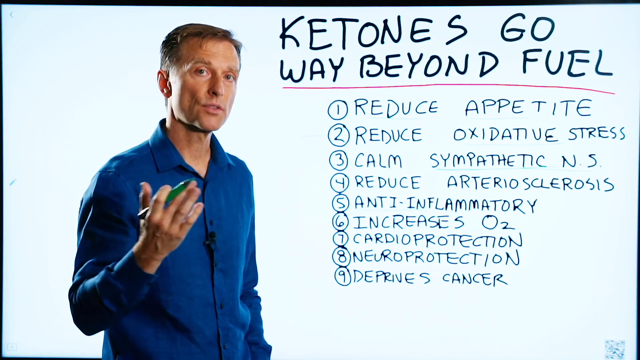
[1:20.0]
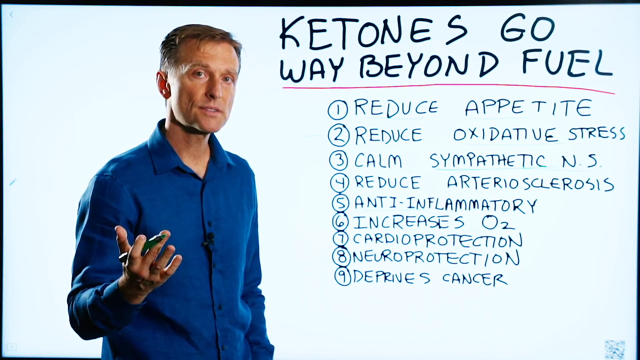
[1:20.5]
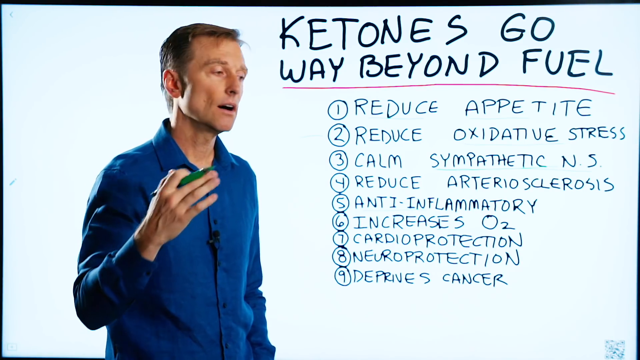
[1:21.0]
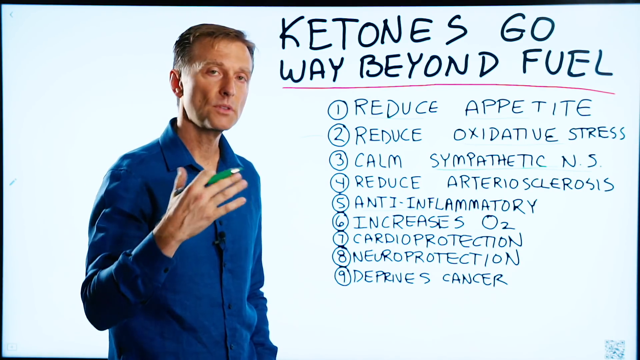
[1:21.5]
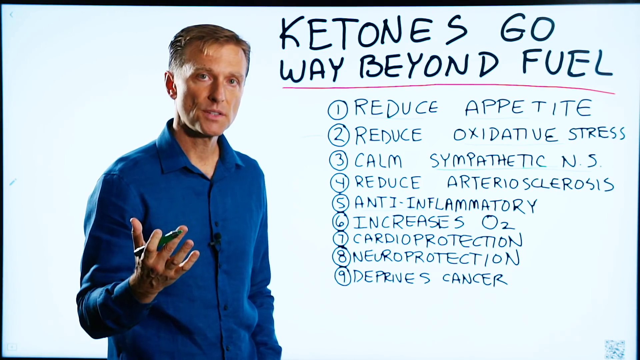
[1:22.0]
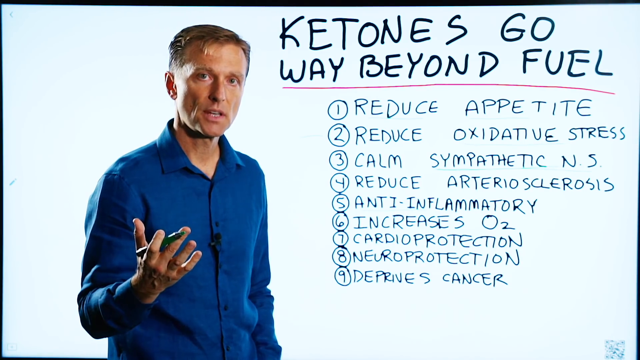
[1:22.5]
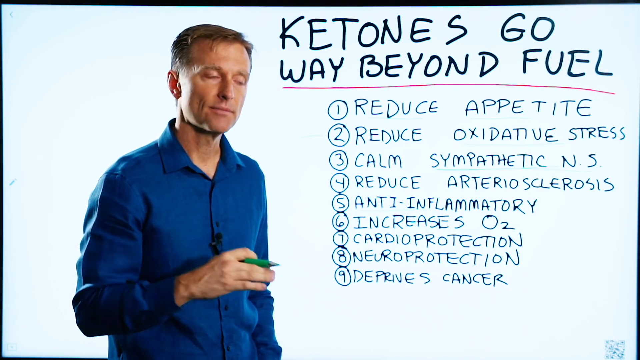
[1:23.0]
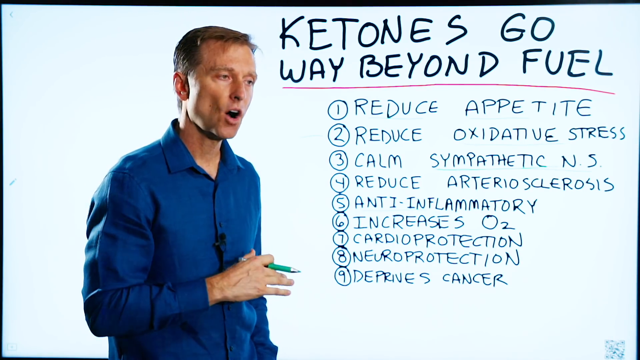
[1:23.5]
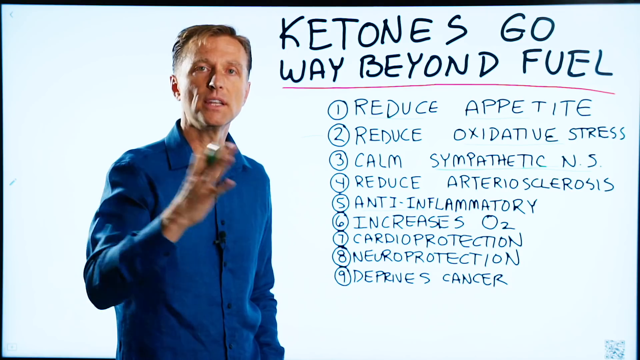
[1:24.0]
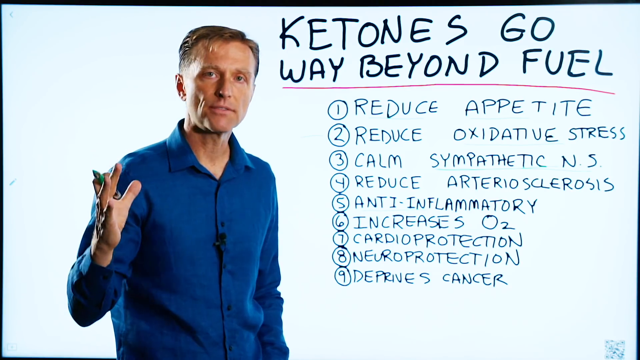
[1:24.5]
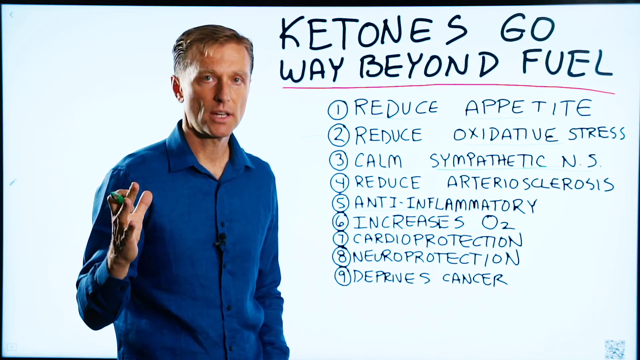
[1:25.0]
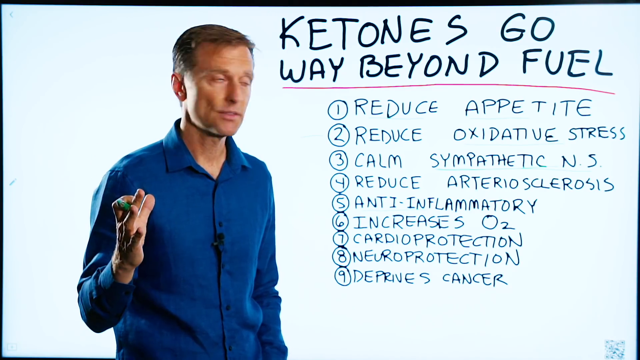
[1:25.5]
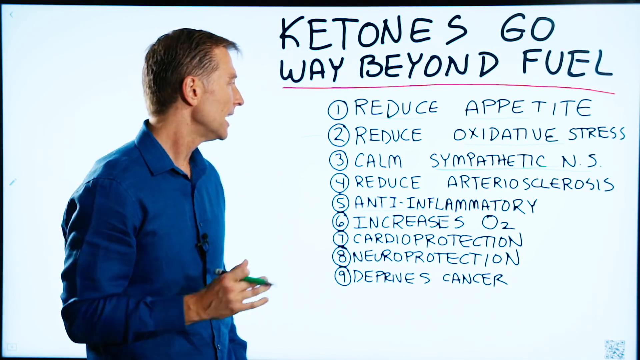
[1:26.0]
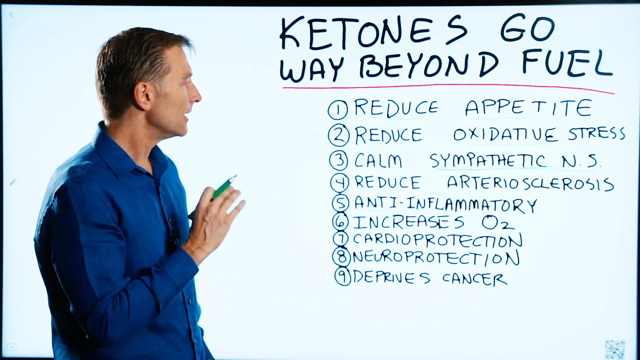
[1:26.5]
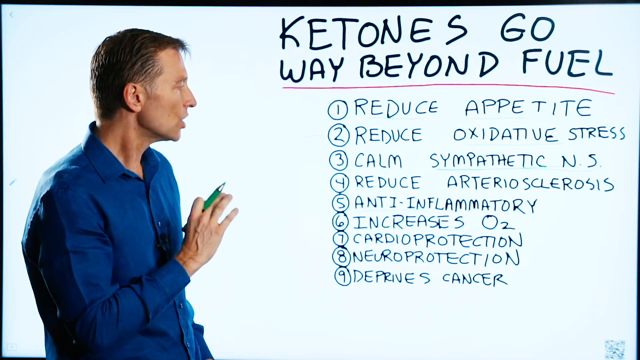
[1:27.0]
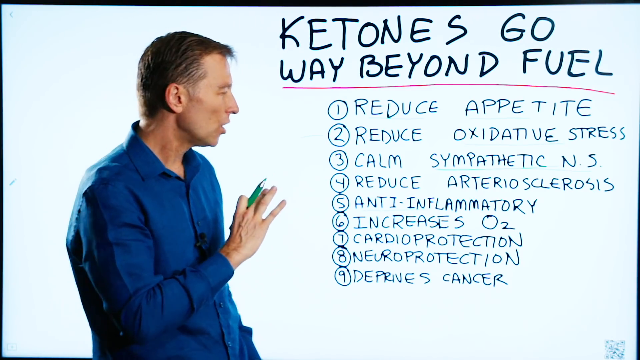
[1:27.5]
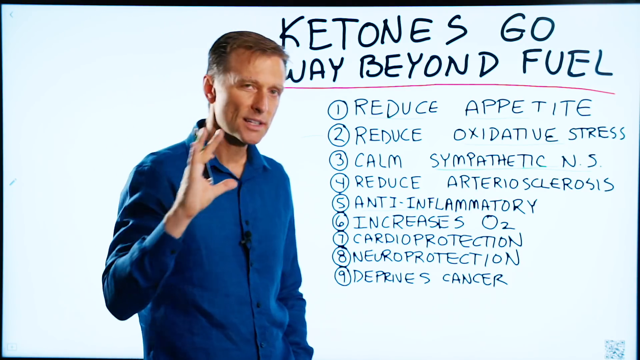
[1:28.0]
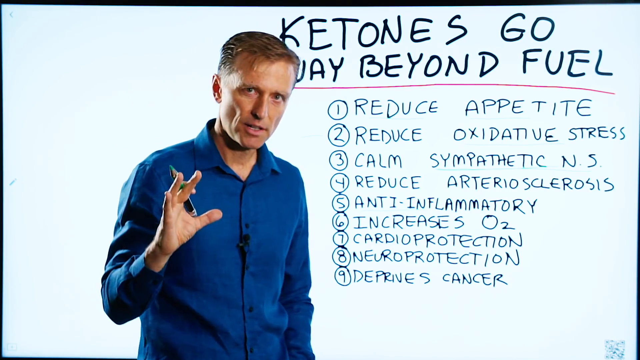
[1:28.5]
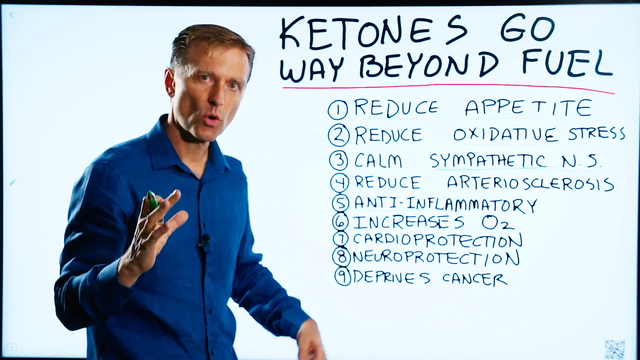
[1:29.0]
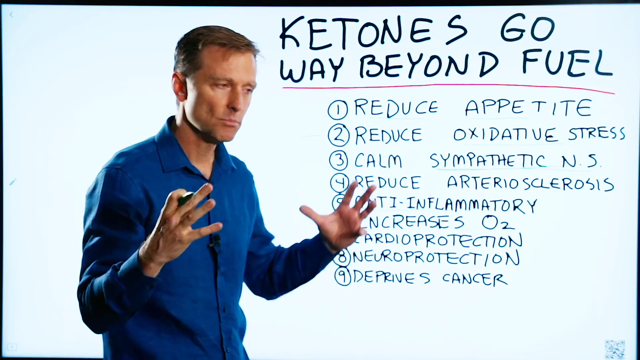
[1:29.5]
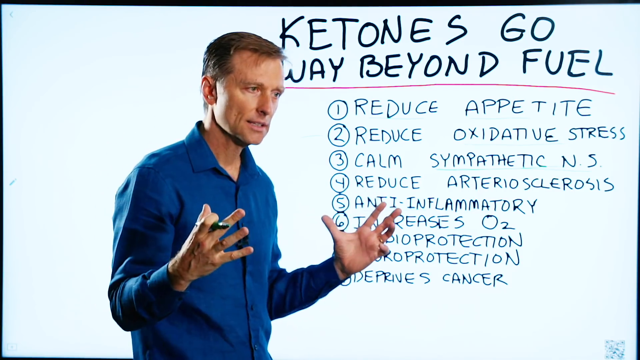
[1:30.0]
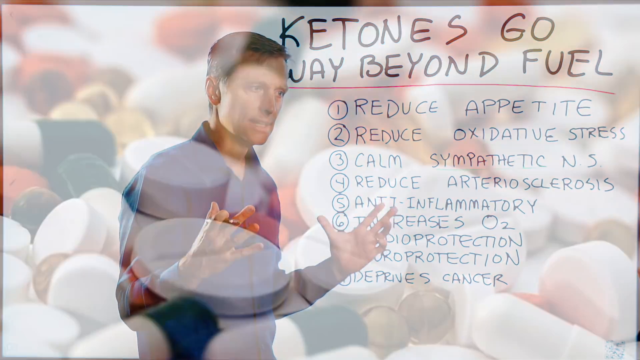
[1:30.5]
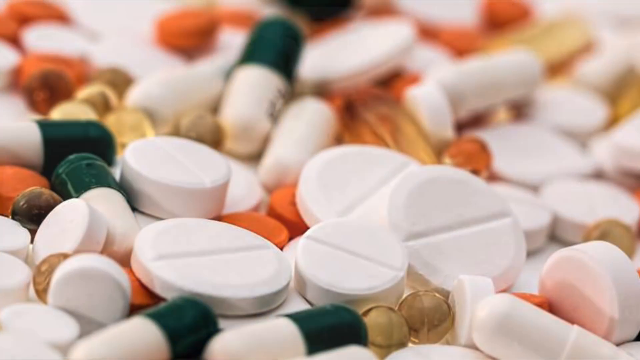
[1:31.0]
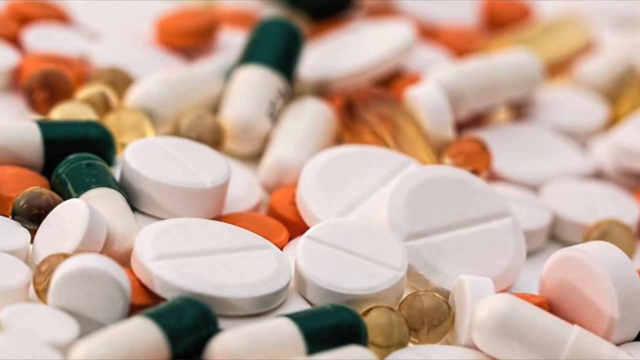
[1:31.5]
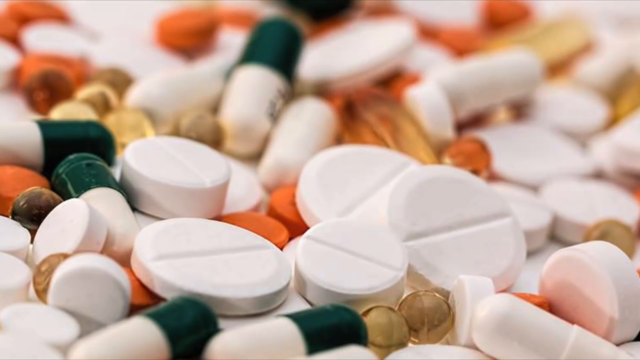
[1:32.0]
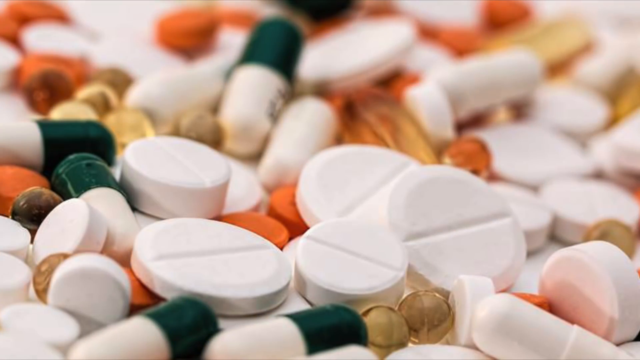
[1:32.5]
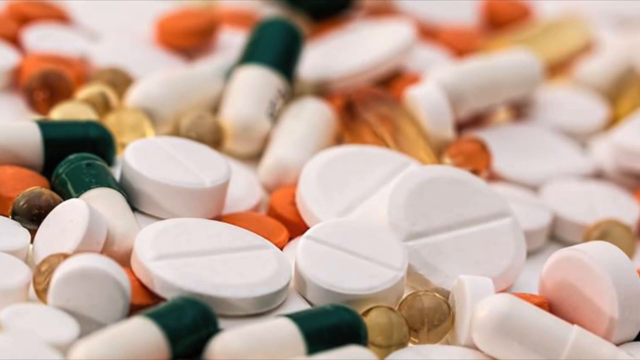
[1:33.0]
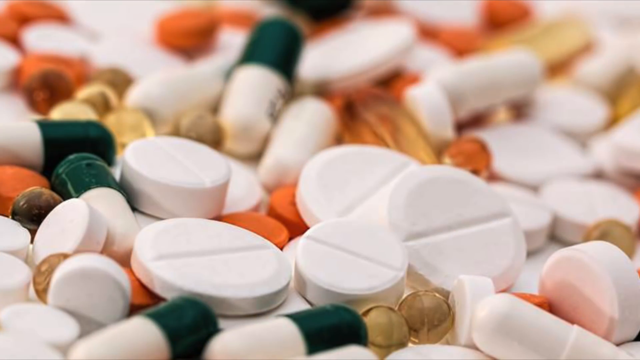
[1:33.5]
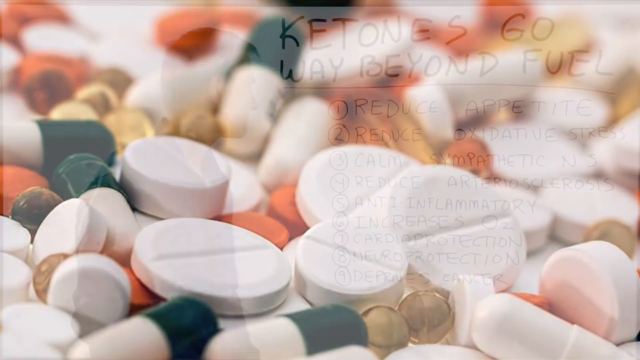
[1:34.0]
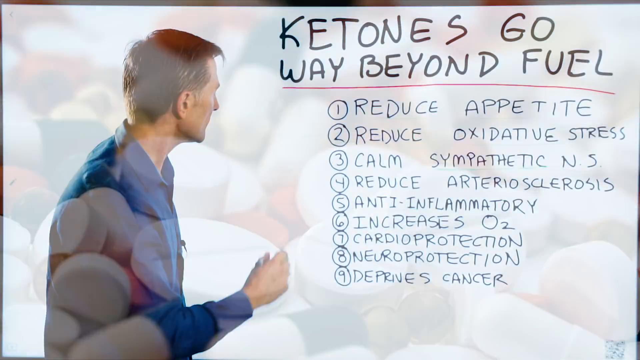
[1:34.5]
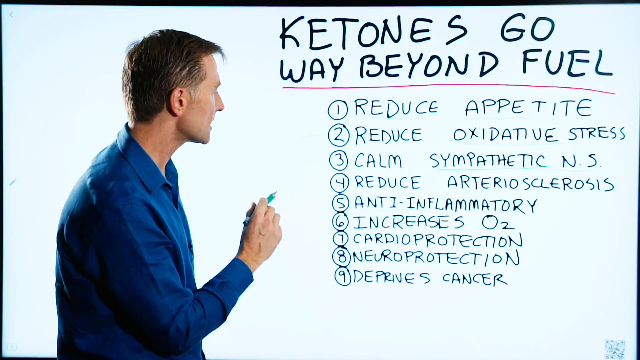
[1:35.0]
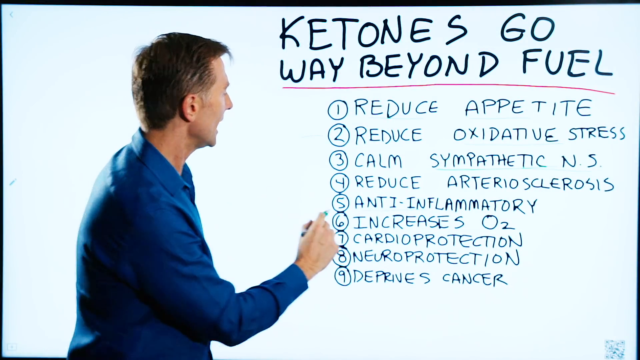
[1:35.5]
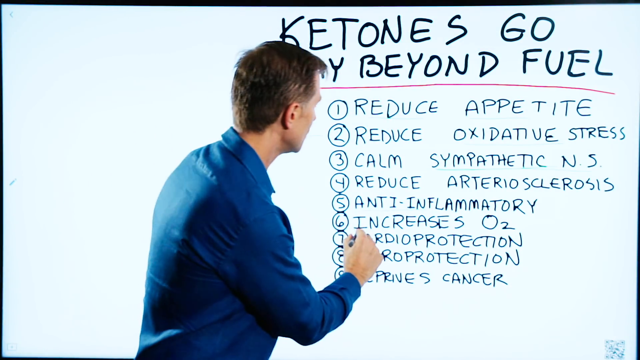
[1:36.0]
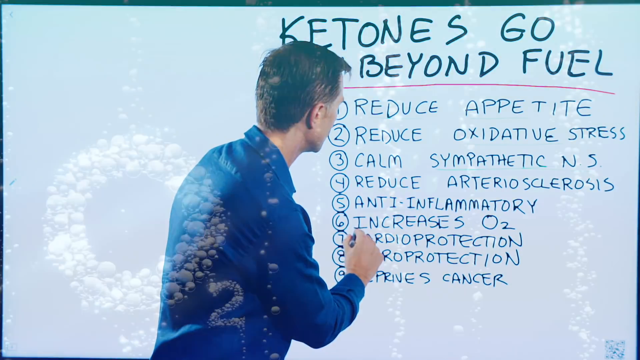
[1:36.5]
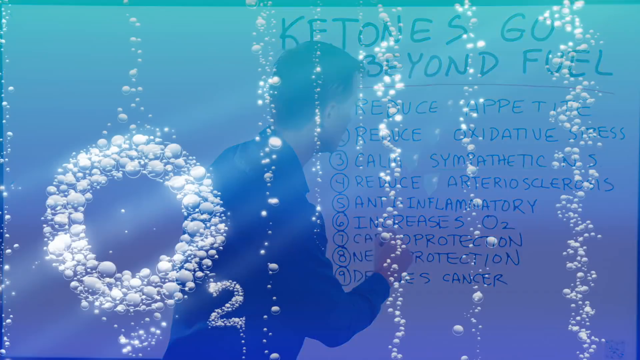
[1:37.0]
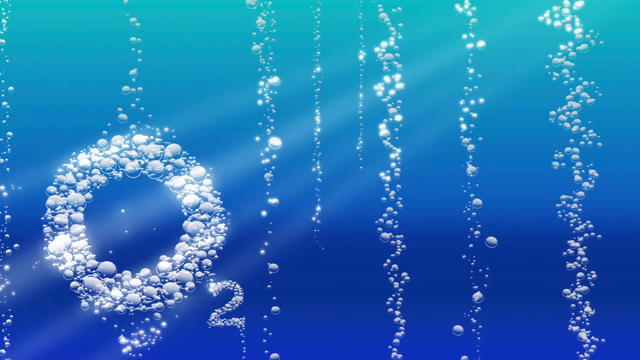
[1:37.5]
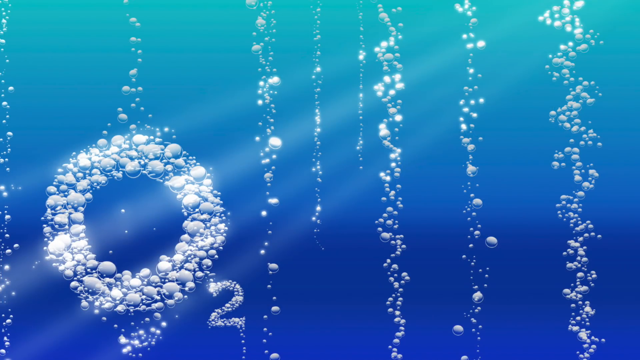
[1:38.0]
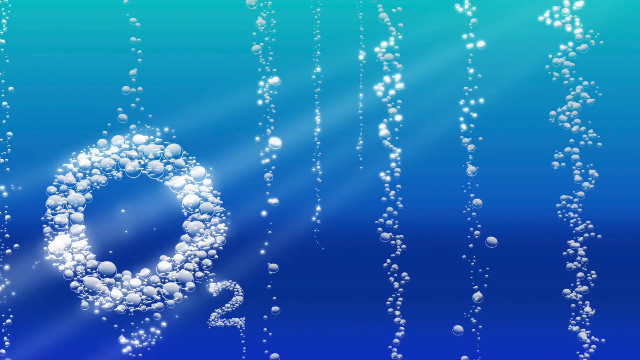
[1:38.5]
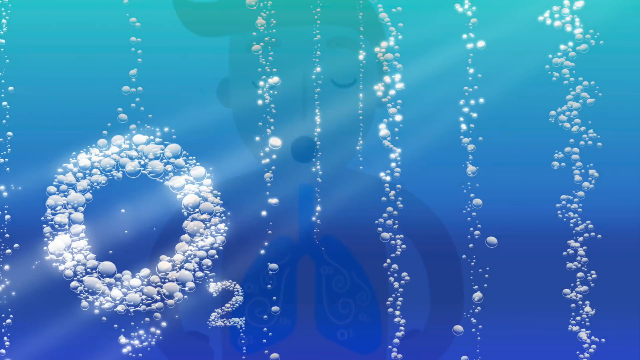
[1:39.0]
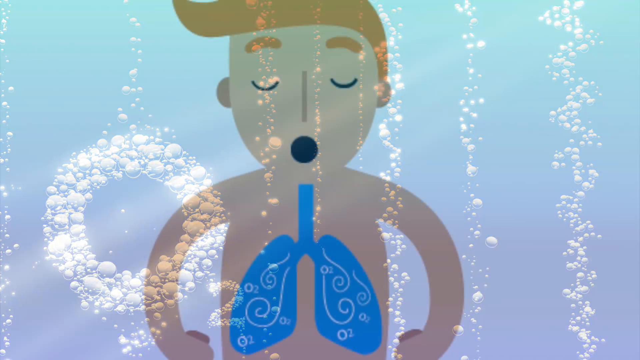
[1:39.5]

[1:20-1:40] The man explains something about his list, gesturing emphatically and talking with his hands. A stock image of what looks like several different types of pills appears. He underlines "increasing O2". An underwater-looking photo shows bubbles making the shape of O2, and a cartoon image shows a white man with orange-red hair who looks like he is breathing.